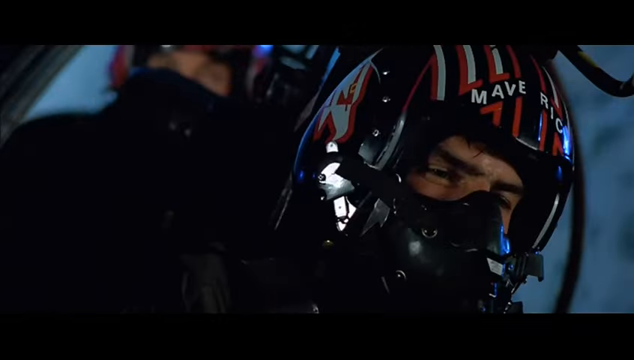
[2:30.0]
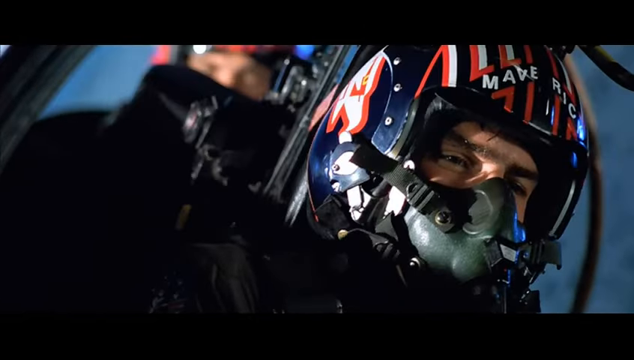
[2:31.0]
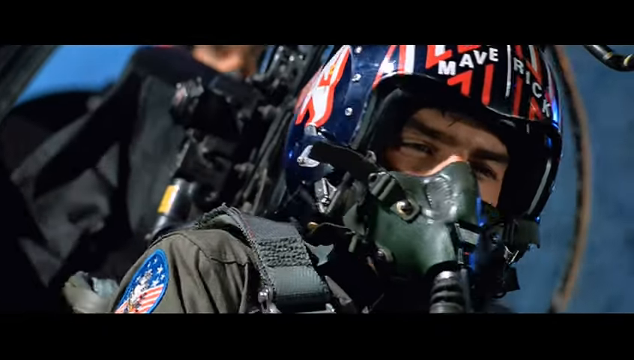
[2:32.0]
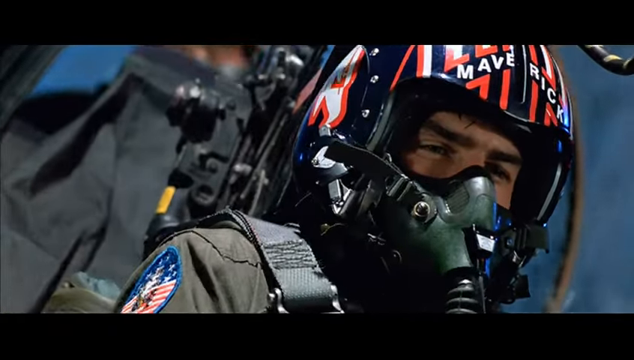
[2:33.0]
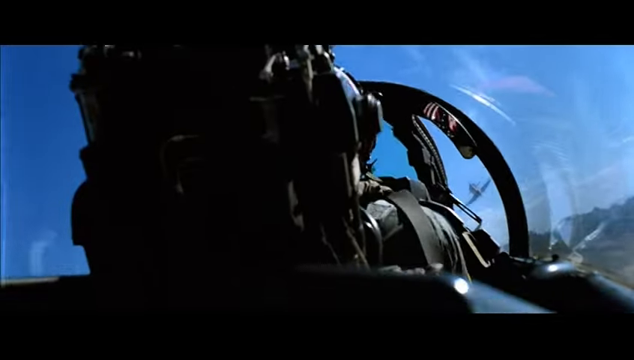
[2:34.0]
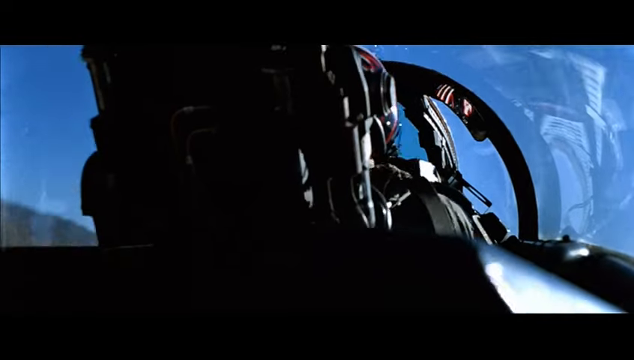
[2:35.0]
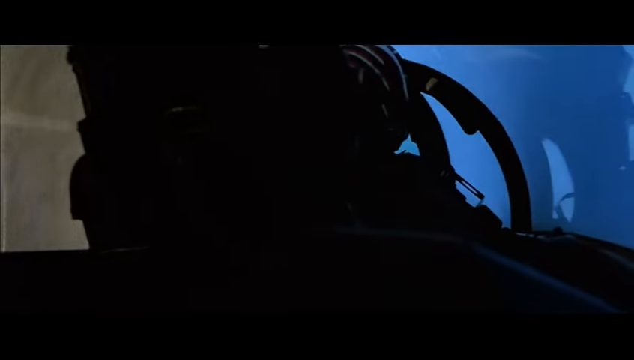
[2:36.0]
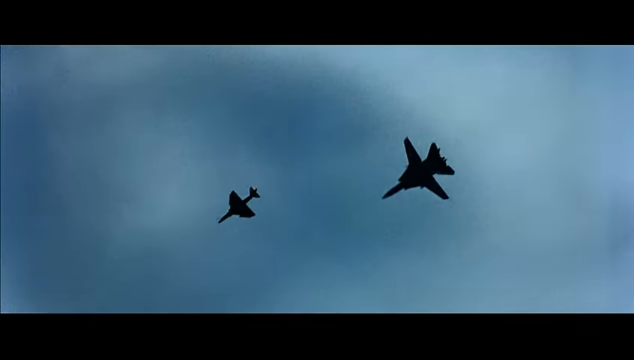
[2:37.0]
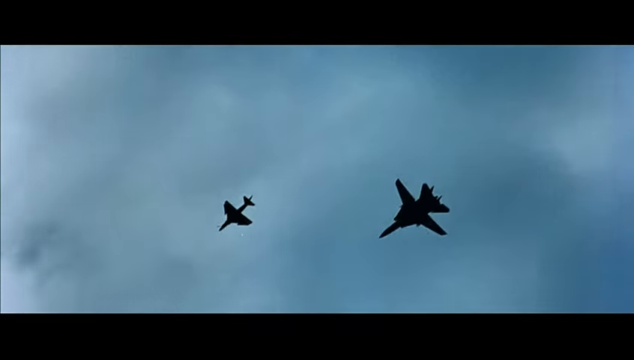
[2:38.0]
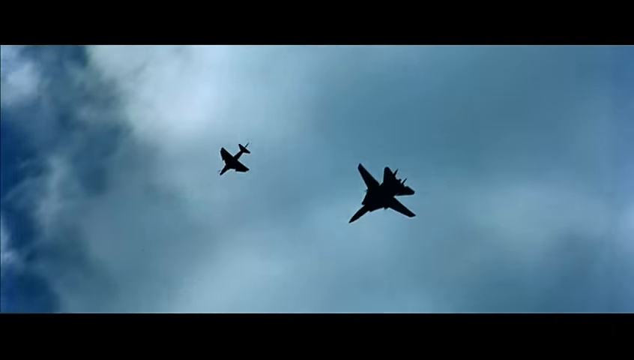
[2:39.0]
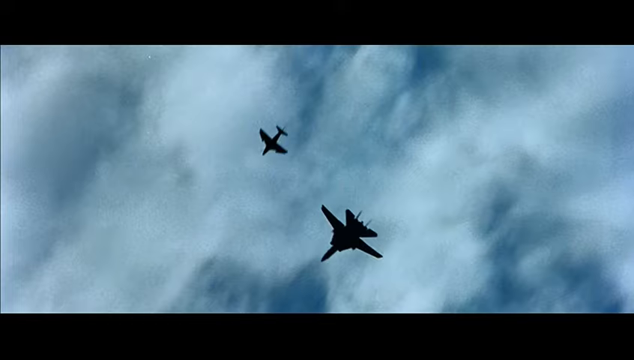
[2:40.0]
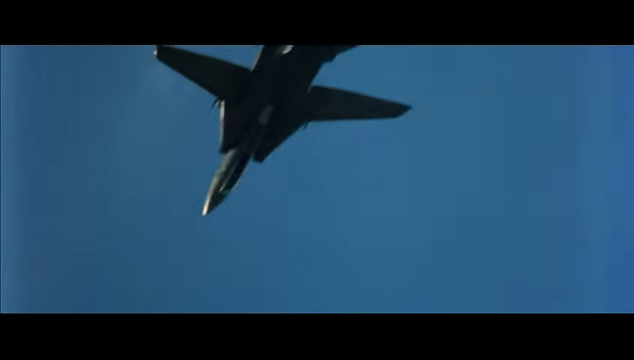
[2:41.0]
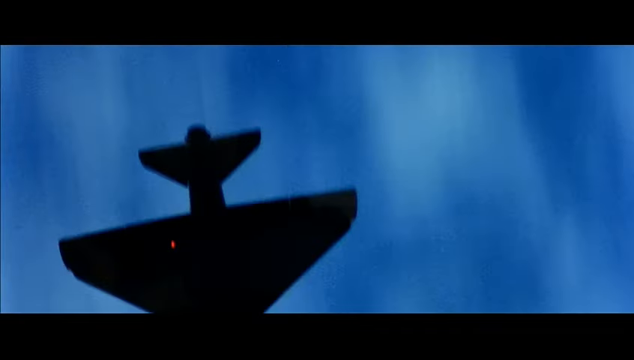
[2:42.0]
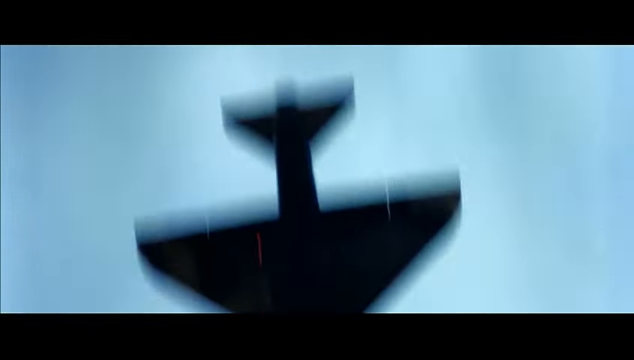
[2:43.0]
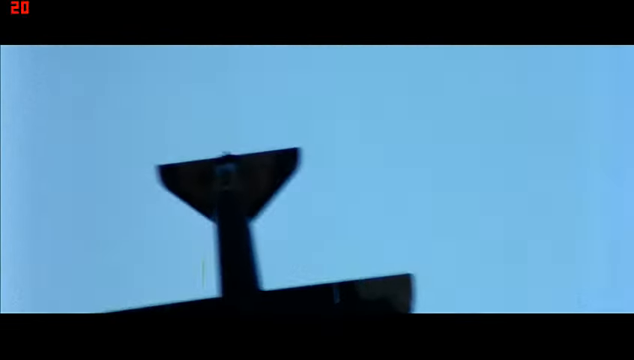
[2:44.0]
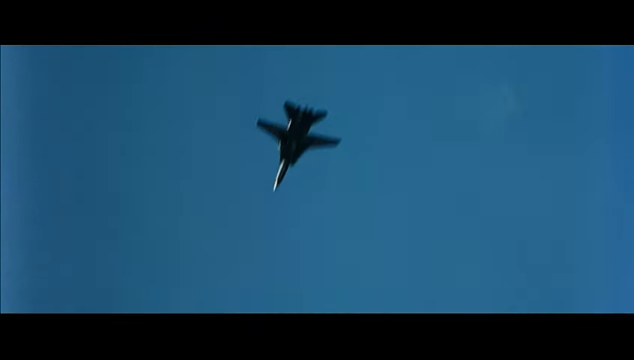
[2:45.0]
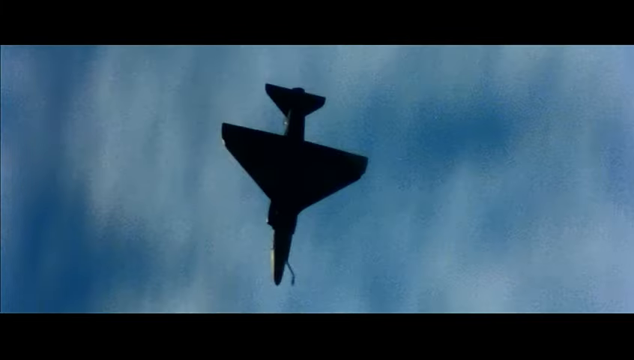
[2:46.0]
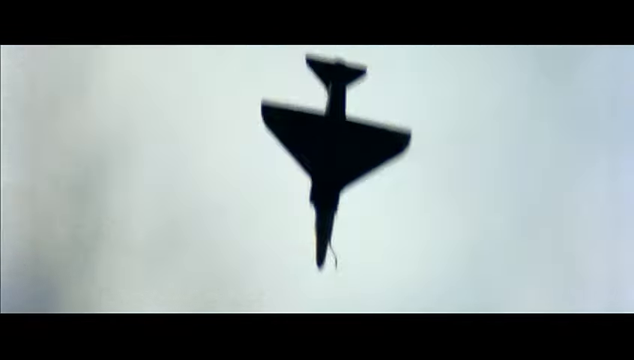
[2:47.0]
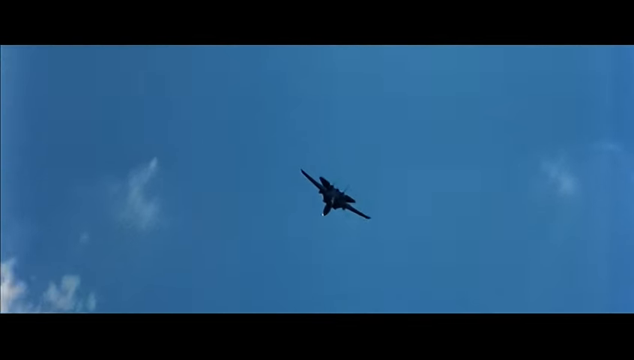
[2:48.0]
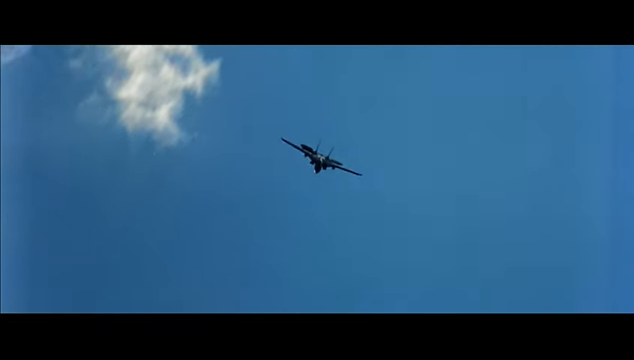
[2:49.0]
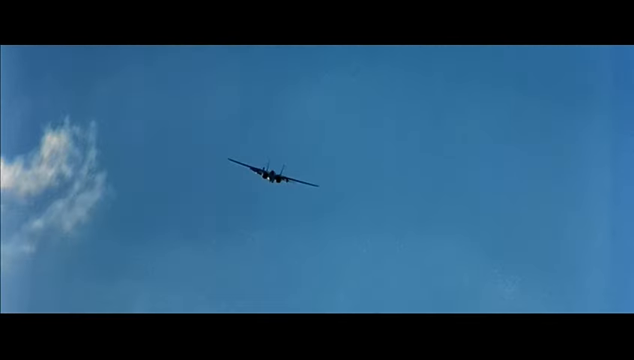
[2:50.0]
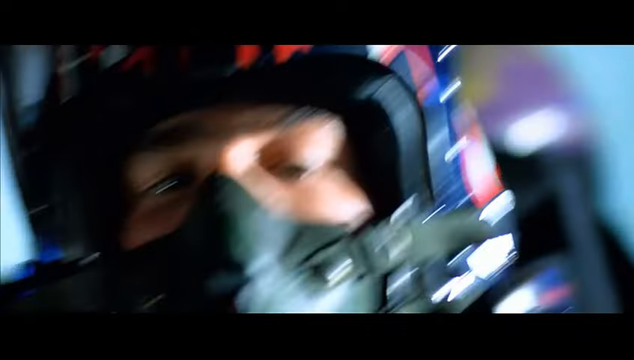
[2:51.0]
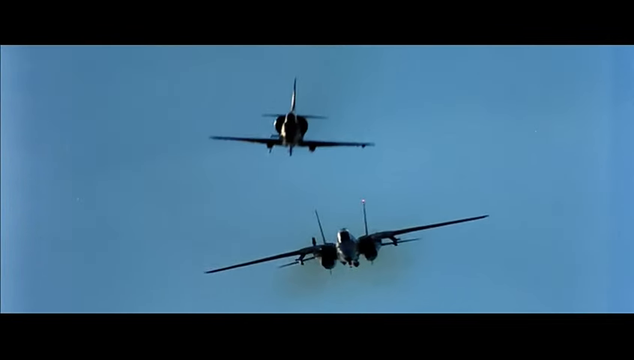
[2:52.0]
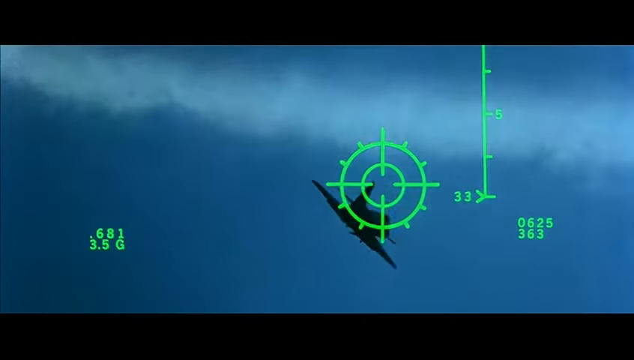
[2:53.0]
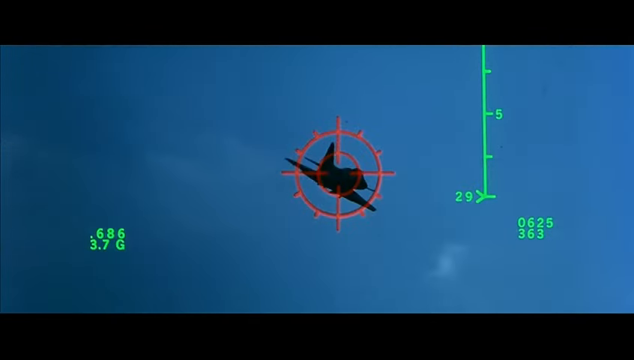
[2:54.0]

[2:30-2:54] Inside the cockpit of a plane, a pilot has his head down to the right of the screen, and the other pilot behind him wears a green oxygen mask. The pilot flying the plane is seen from behind, with blue sky and rocky terrain visible outside. From below, the two planes fly overhead against grey skies. After another shot inside the cockpit, a target is on a plane and seems to be zeroing in; it then turns red and starts to flash. The pilot wearing the Maverick helmet constantly turns around and looks to his right to watch what the other plane is doing.